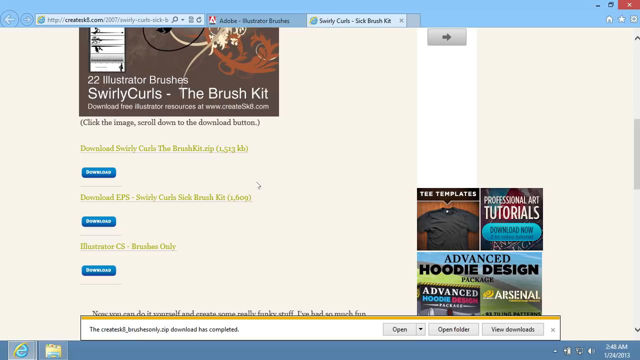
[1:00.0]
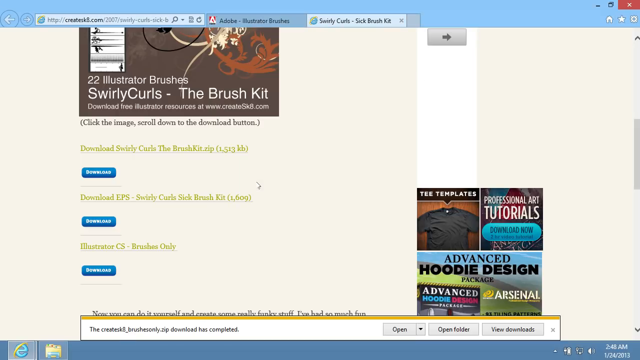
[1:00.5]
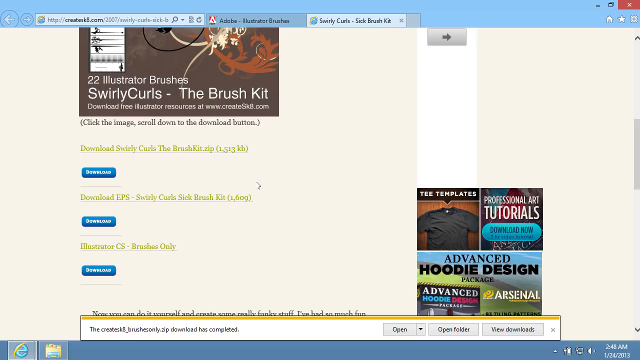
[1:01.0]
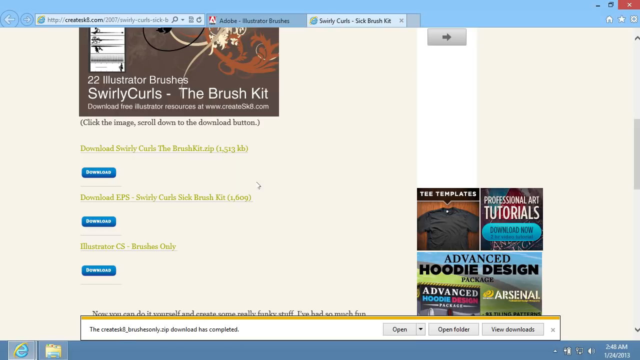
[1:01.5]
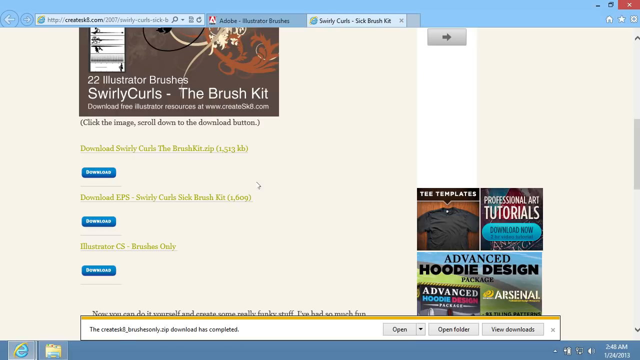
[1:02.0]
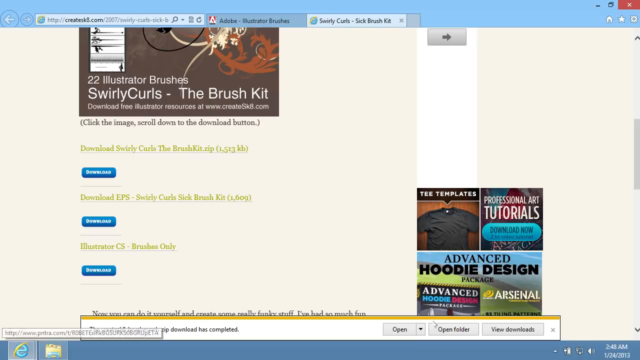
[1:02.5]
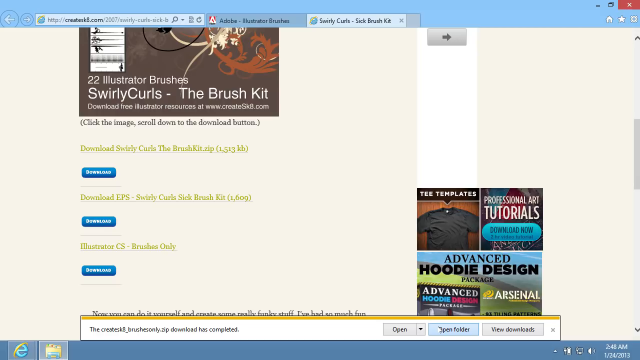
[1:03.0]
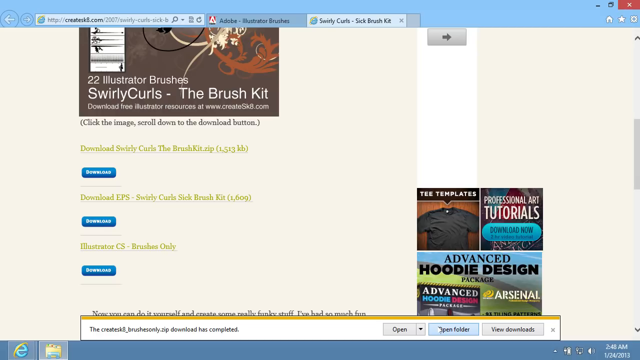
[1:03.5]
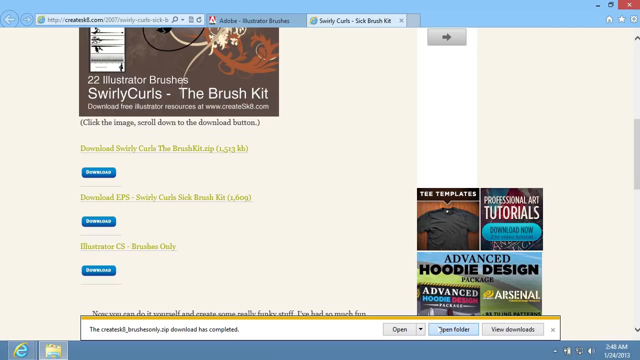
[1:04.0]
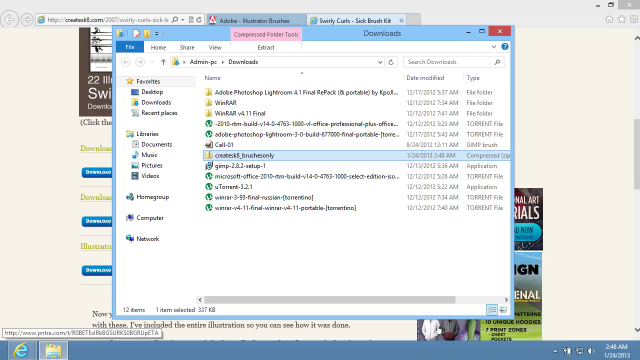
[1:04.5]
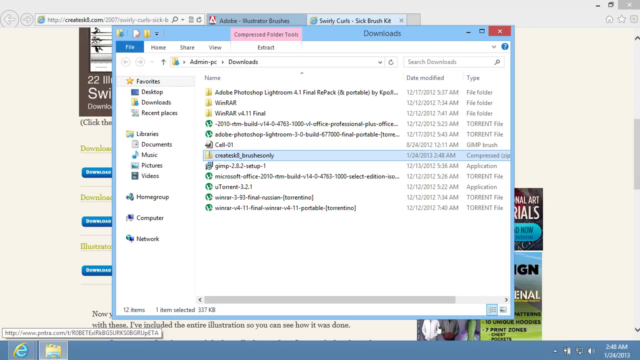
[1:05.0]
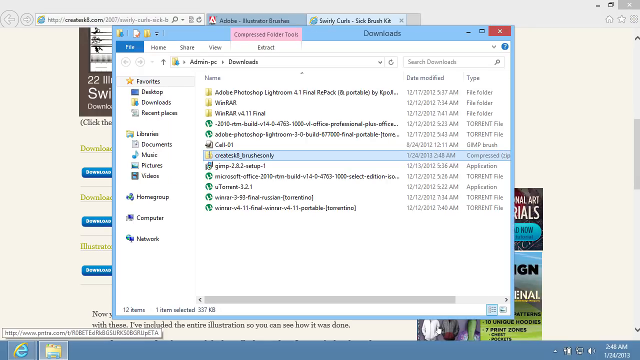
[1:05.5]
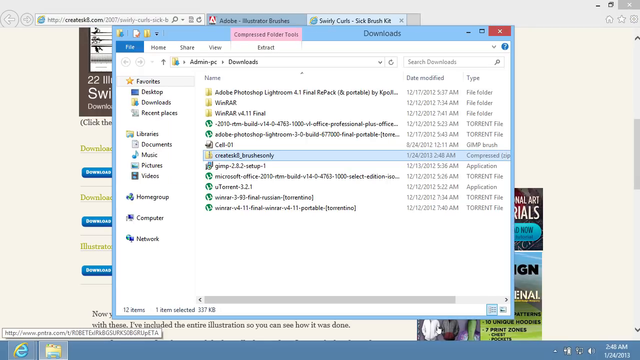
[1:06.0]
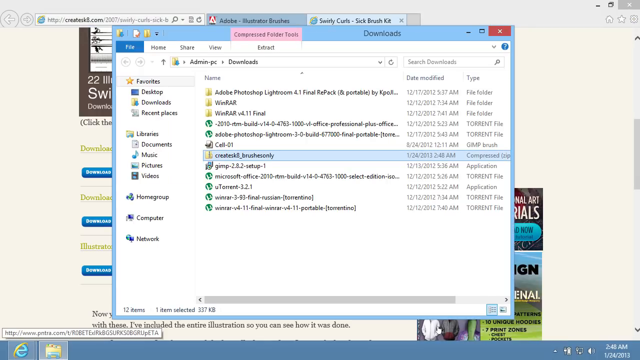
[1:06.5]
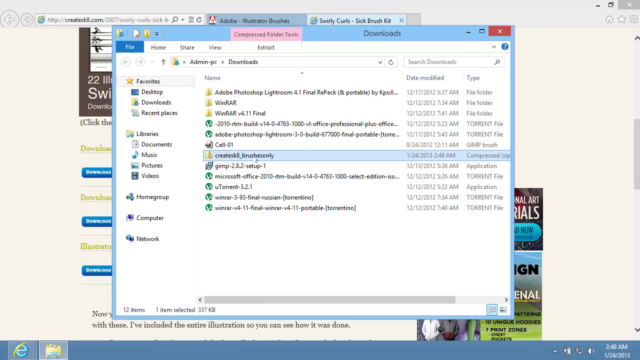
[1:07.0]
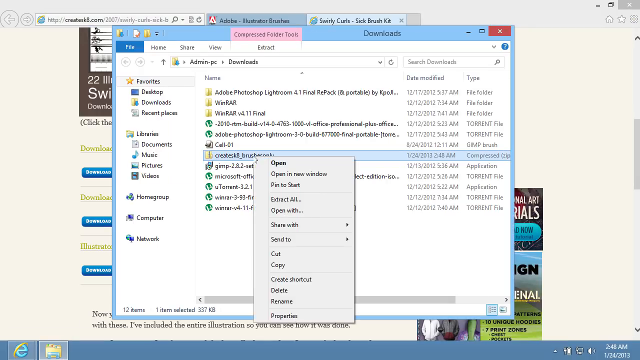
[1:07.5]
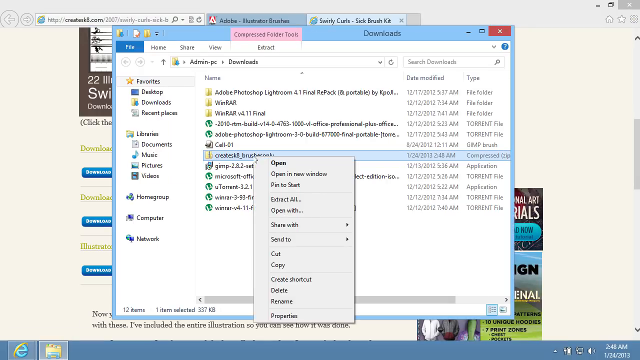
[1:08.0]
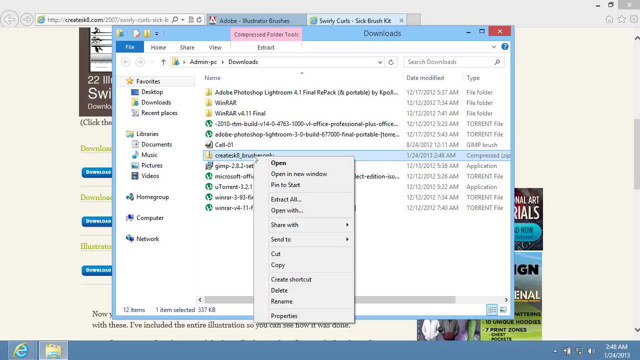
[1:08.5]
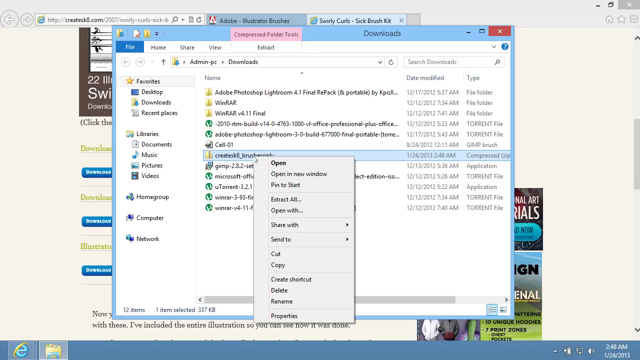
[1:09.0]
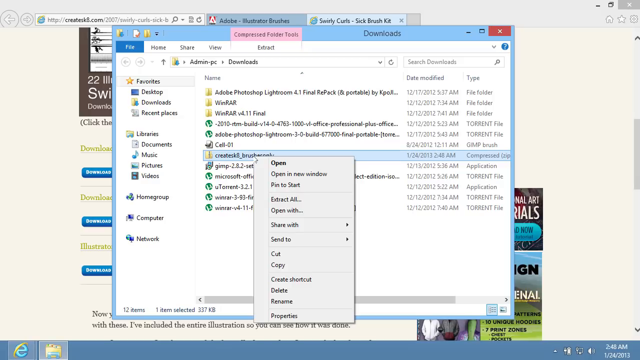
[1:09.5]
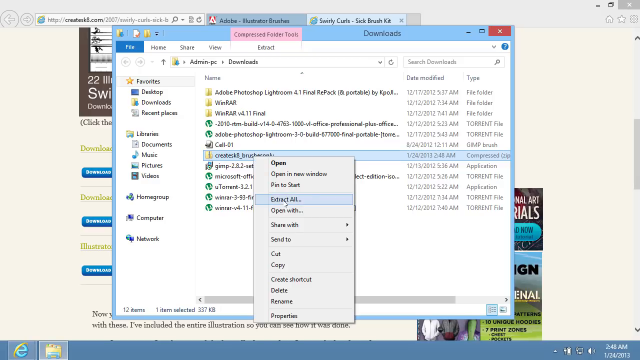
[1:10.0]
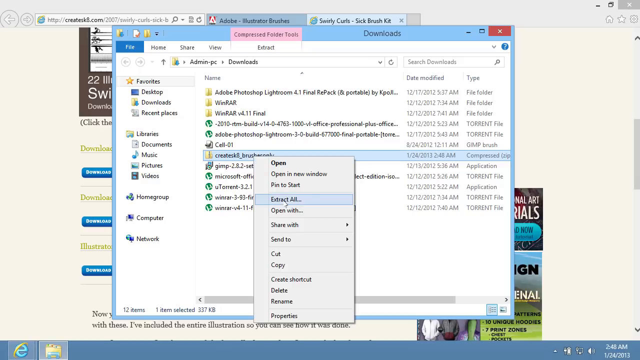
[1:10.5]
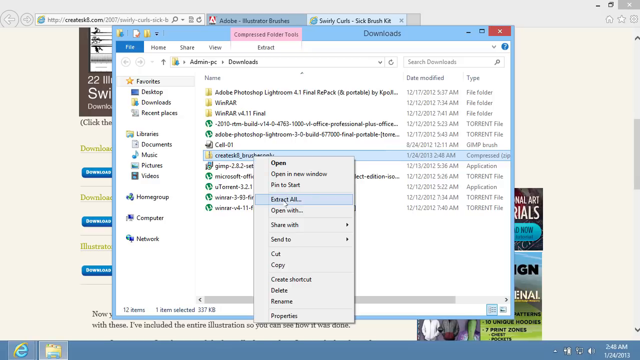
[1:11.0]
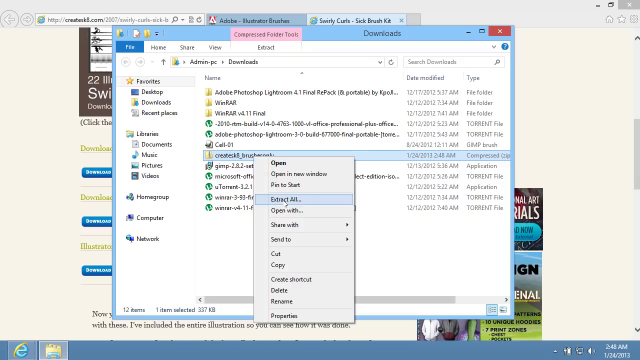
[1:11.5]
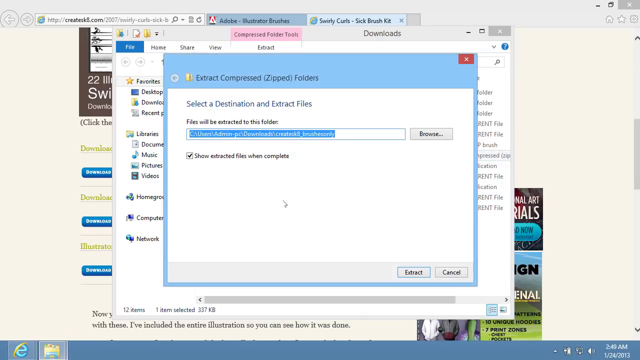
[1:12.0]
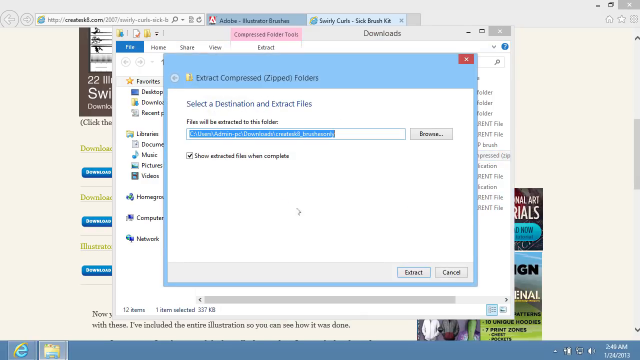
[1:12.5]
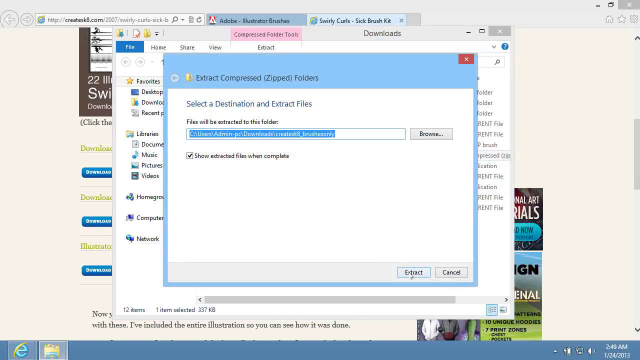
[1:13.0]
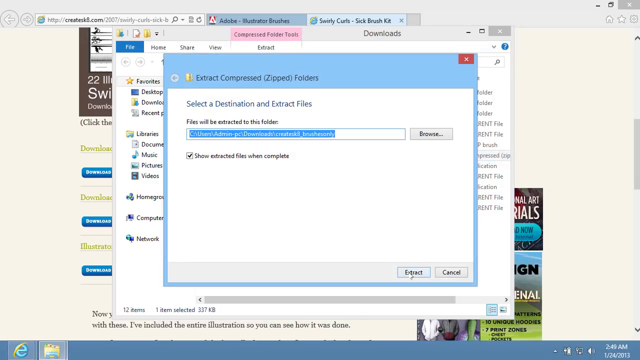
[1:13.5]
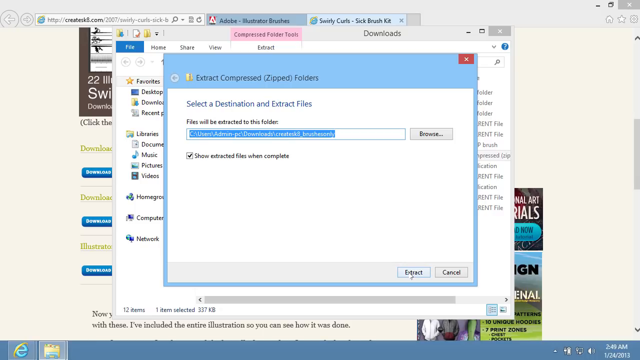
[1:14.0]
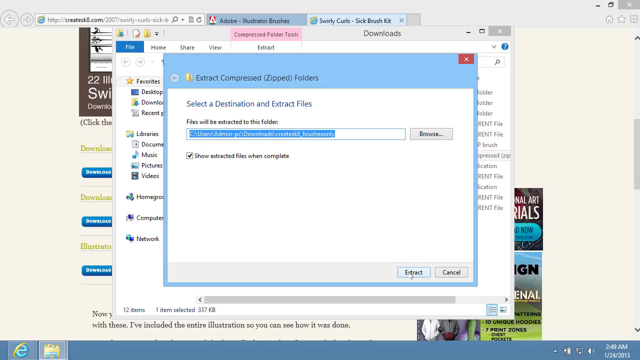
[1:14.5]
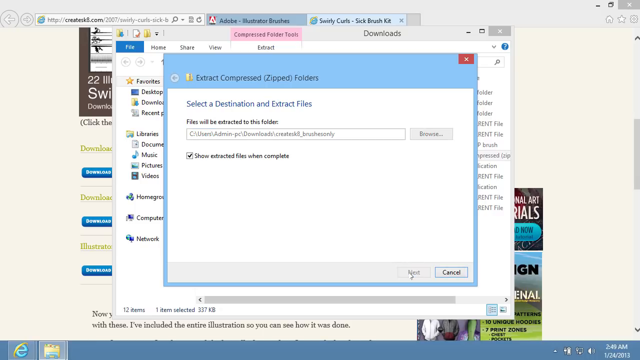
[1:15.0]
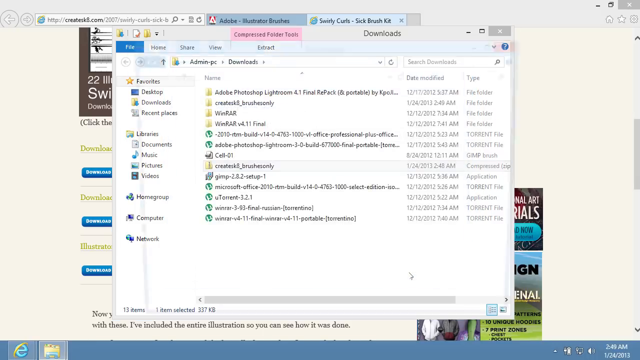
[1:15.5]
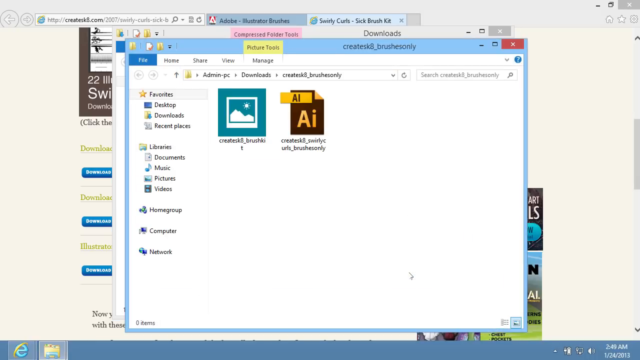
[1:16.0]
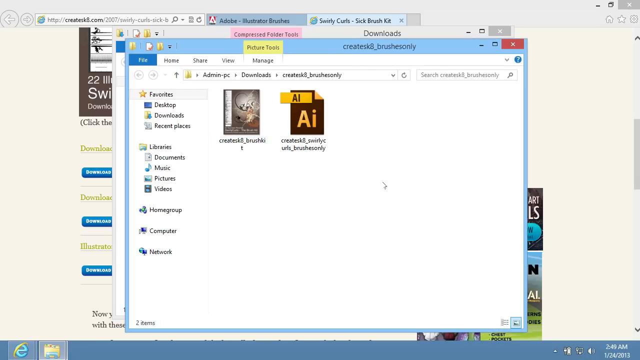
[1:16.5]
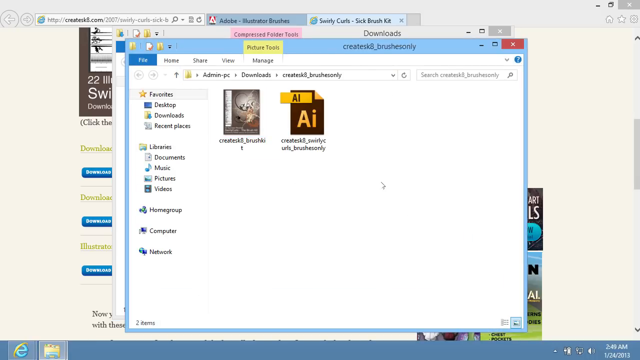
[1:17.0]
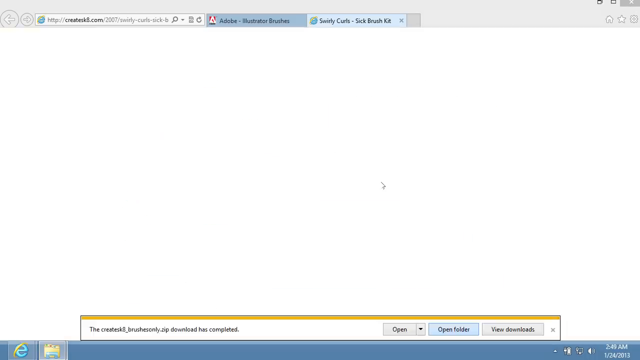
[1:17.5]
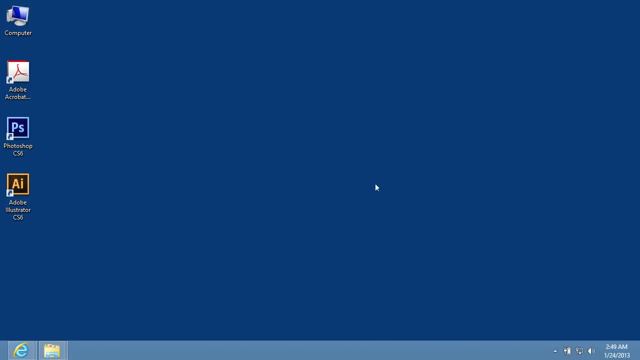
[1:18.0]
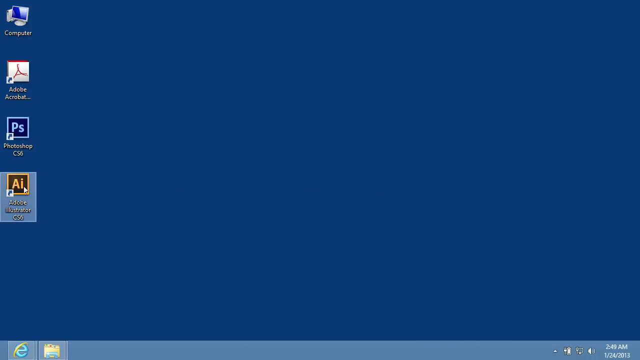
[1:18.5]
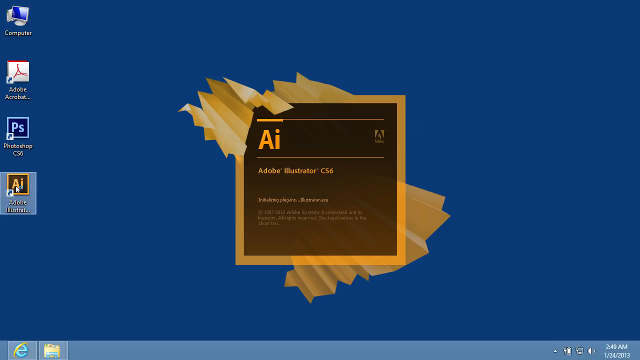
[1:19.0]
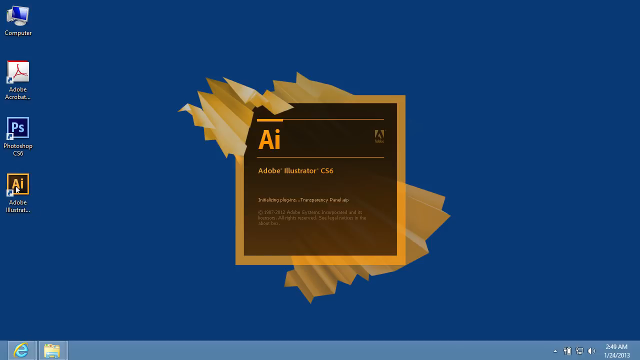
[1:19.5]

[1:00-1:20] The page for the Swirly Curls brush kit on the adobe.com website is on screen, and the person reads about it. A window pane opens and they modify what looks like a destination, apparently choosing a location on their computer to download the brush kit into. They then navigate away and press the icon to start Adobe Illustrator, and the Illustrator program begins to open.